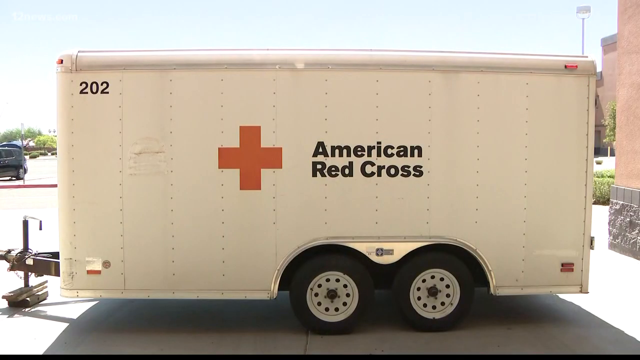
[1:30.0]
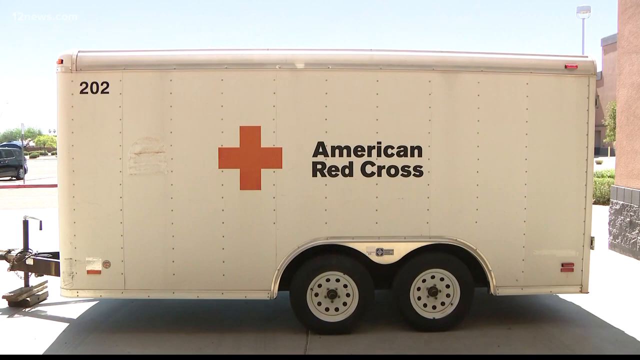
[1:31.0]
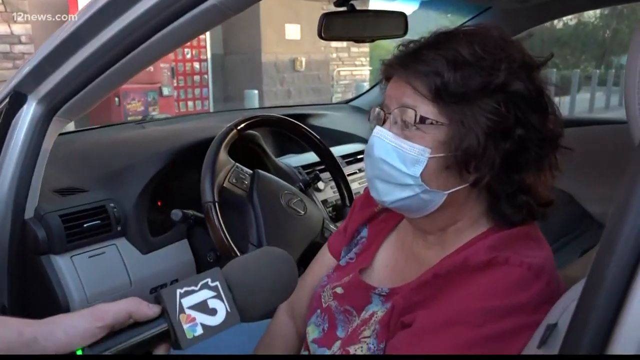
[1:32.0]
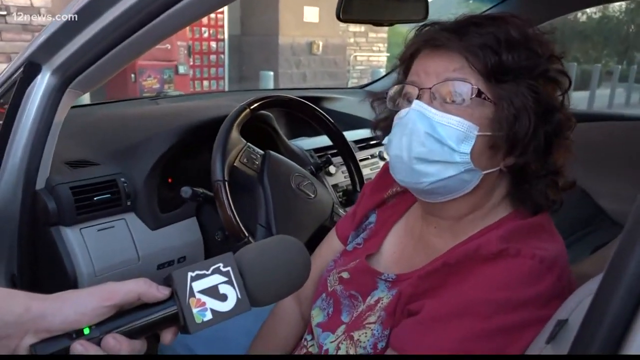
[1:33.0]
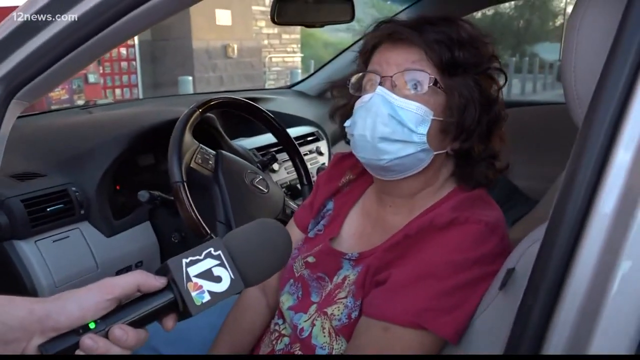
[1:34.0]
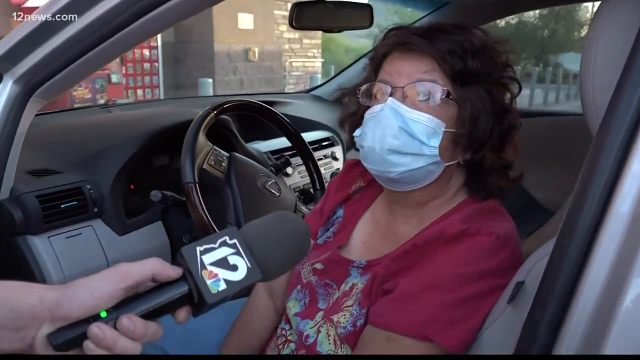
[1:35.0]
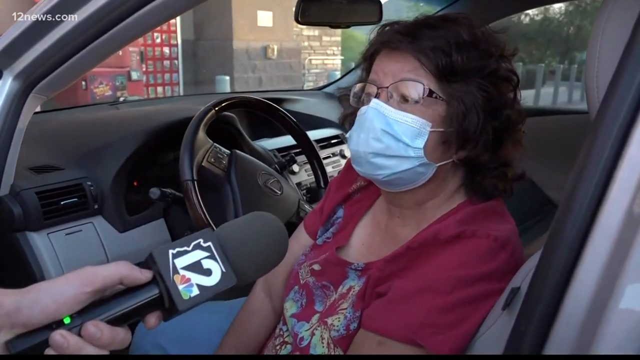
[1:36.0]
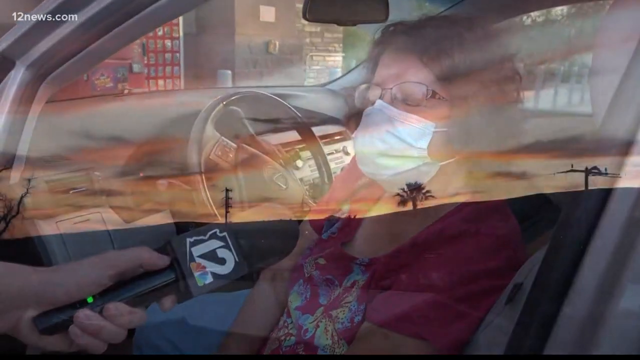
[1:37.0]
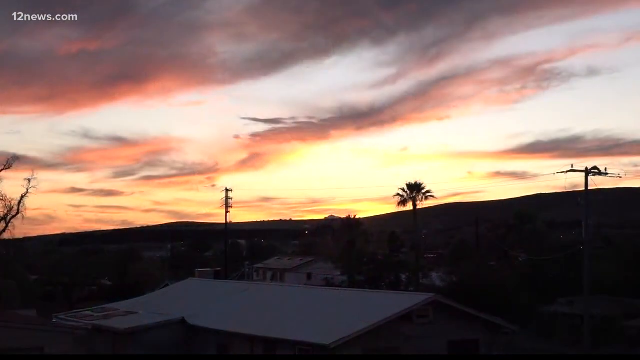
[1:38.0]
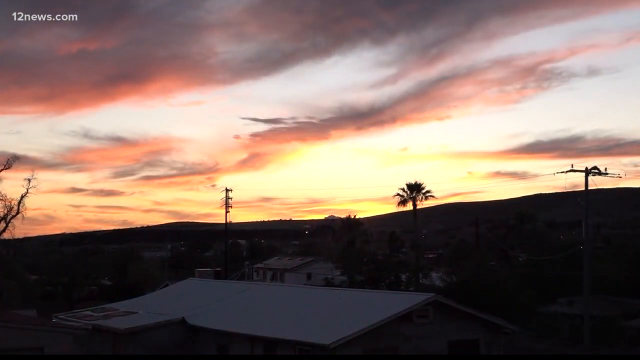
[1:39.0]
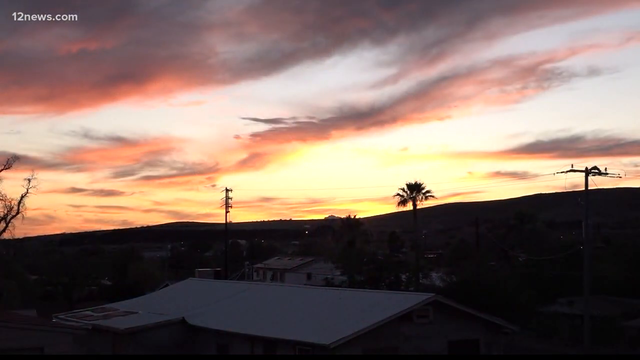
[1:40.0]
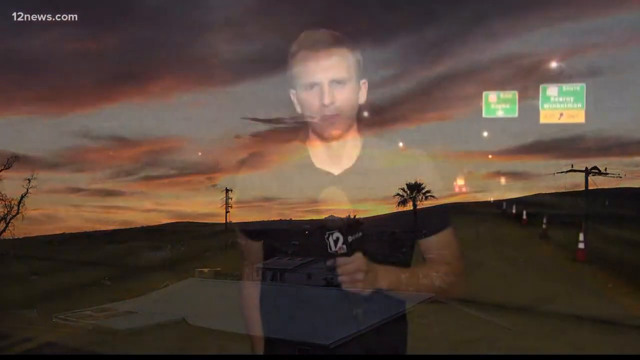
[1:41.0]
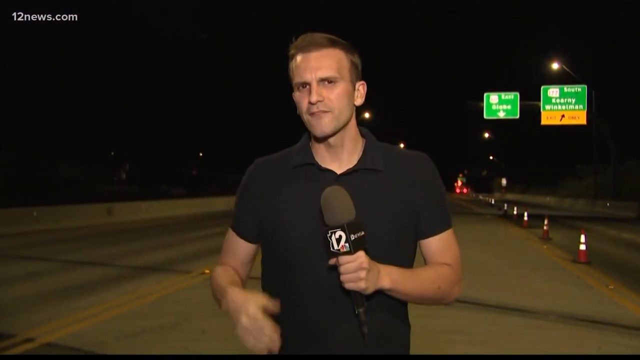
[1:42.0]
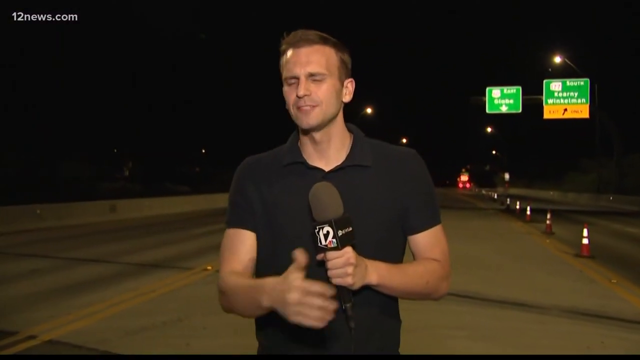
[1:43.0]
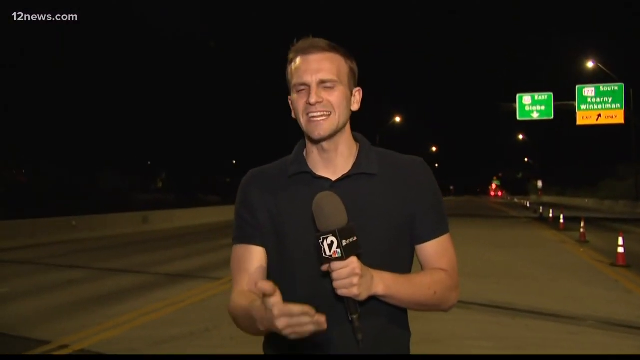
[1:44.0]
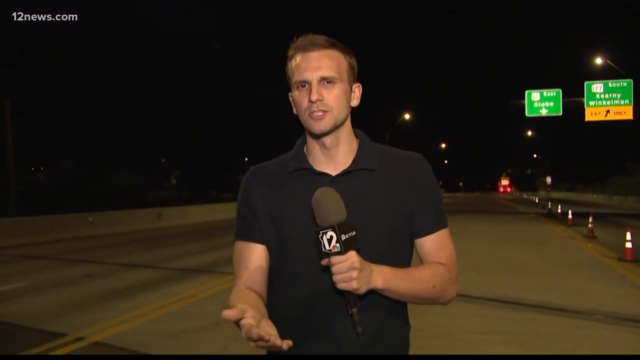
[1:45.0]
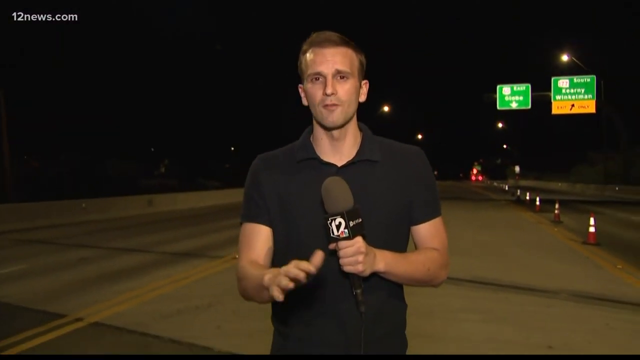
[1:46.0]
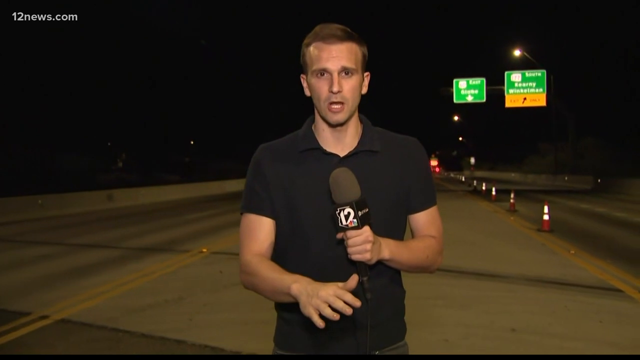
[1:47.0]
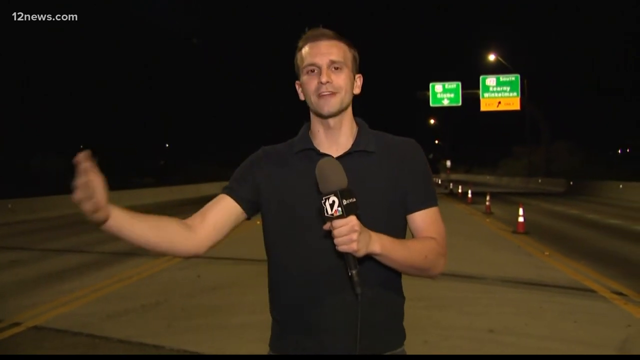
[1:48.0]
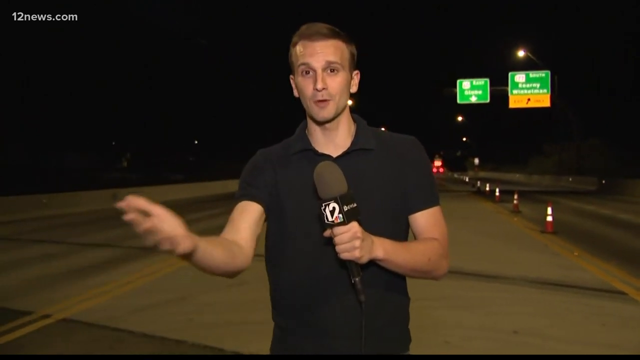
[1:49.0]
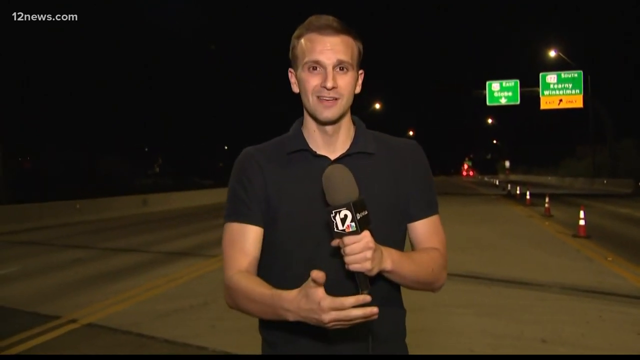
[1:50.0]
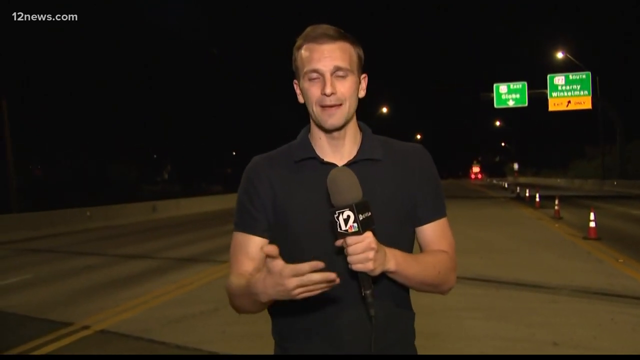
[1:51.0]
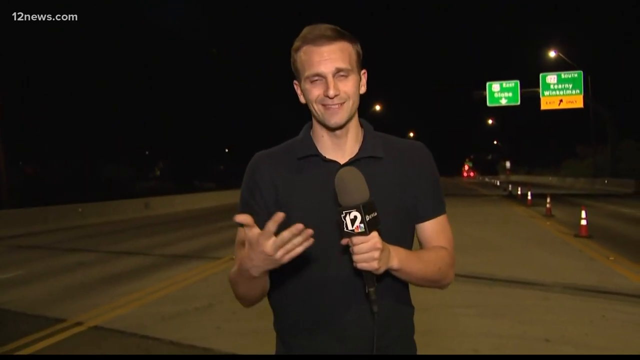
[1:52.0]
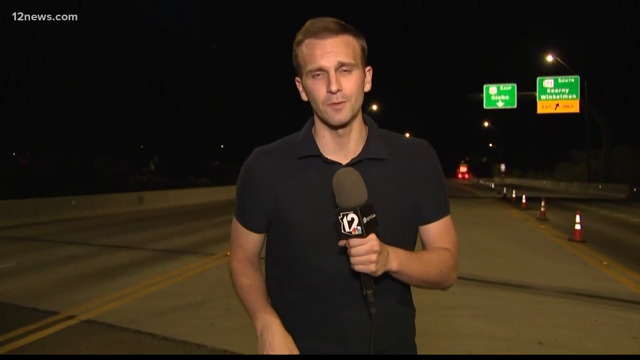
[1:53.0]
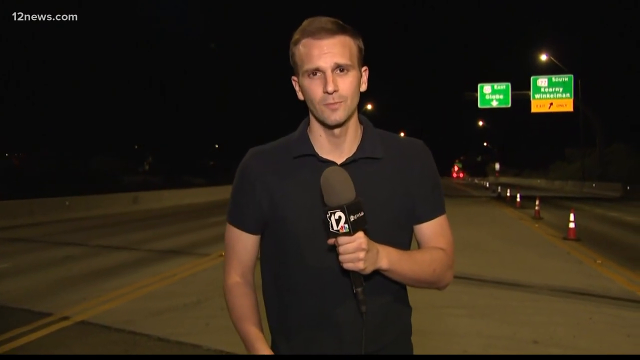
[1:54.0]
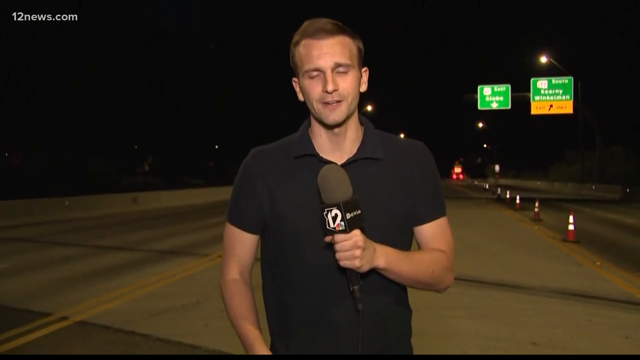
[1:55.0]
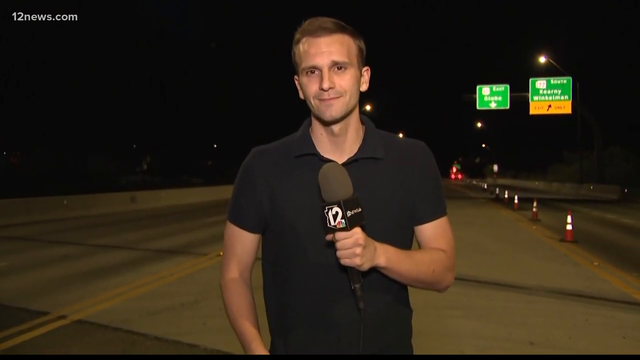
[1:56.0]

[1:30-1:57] The American Red Cross trailer remains prominently in the frame before a cut back to the interviewed woman wearing the COVID mask. She is sitting in her car and continues to recount her experience of the fire. A transitional scene shows a sunset over a mountain vista with desert foliage and plants in the background. A jump cut then shows Michael Doudna giving his final report from the field, after which he sends the story back to the news anchor in the studio, and the video abruptly ends.